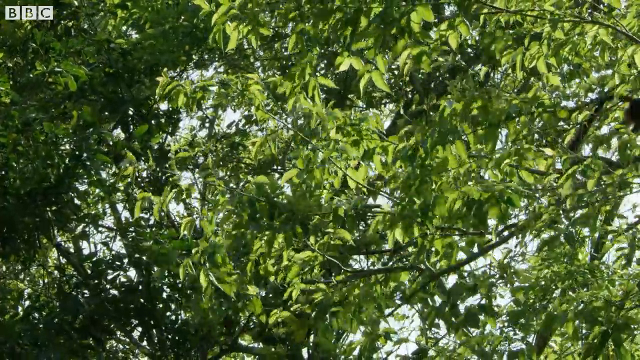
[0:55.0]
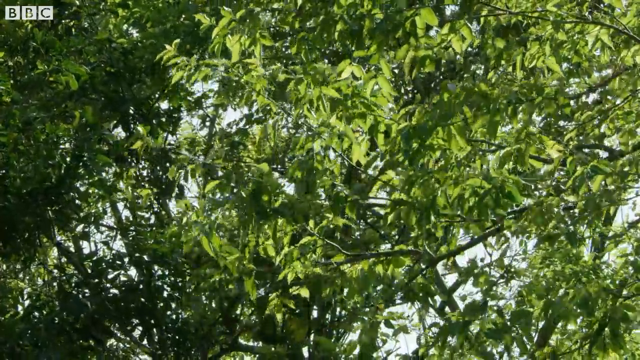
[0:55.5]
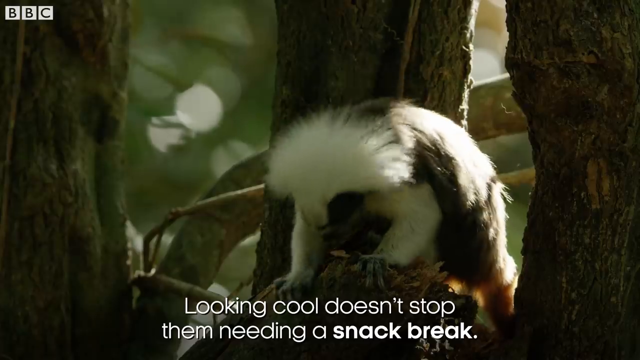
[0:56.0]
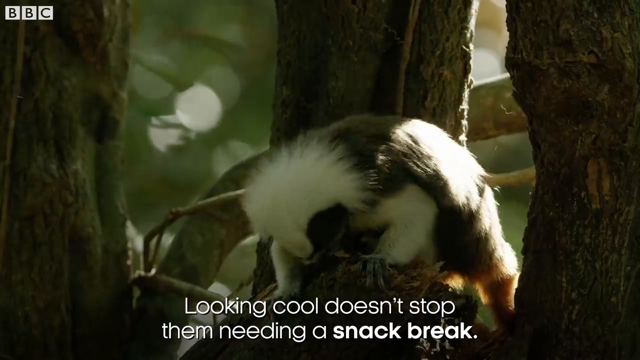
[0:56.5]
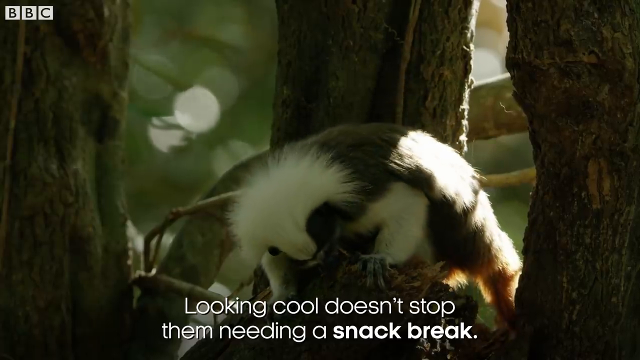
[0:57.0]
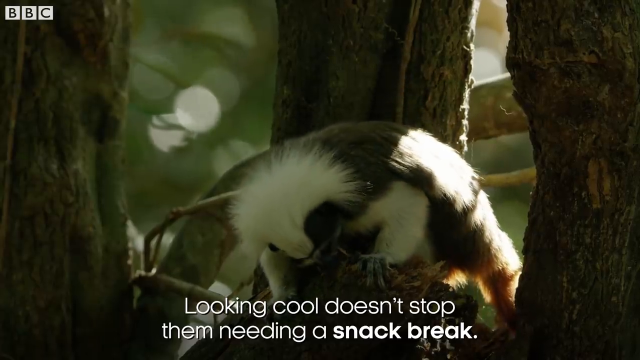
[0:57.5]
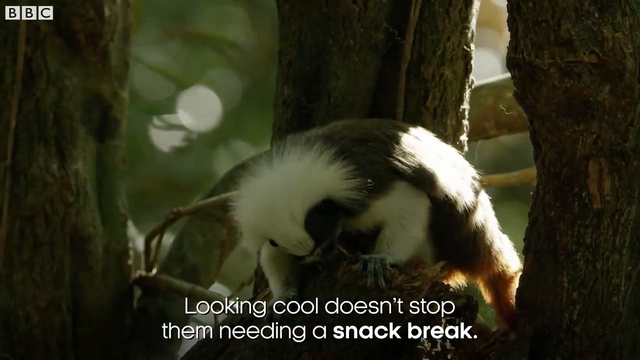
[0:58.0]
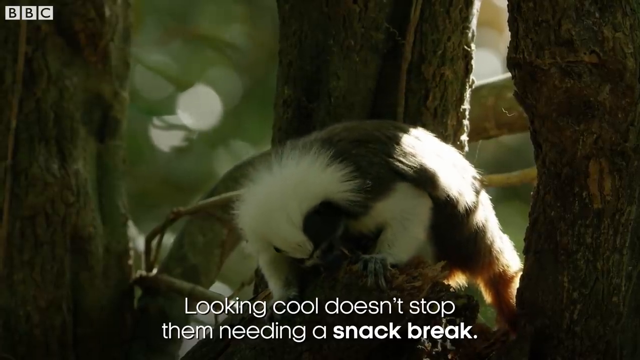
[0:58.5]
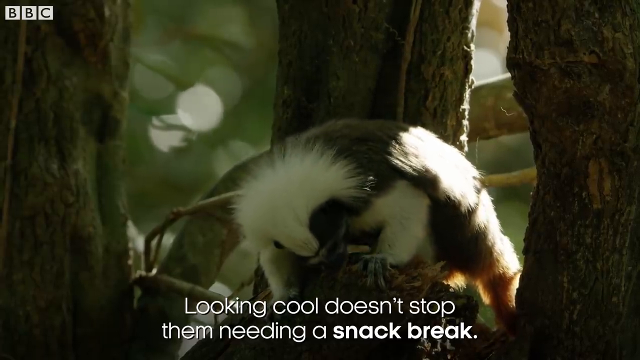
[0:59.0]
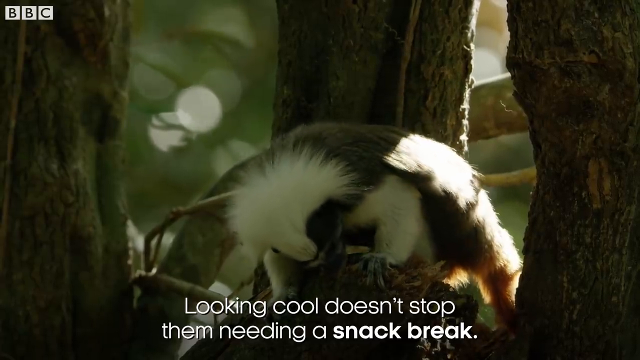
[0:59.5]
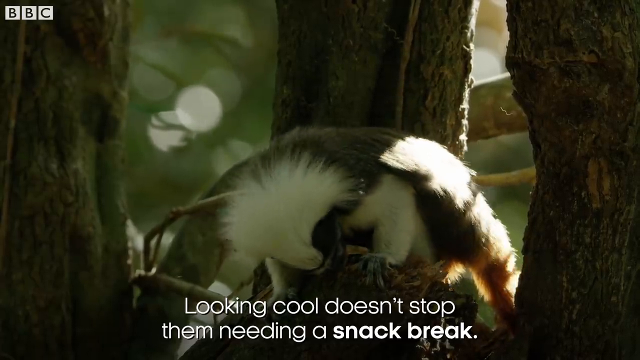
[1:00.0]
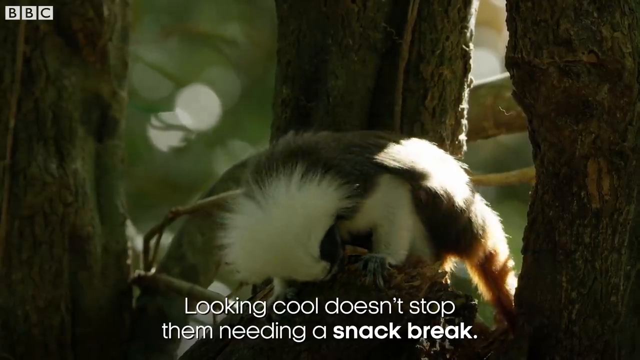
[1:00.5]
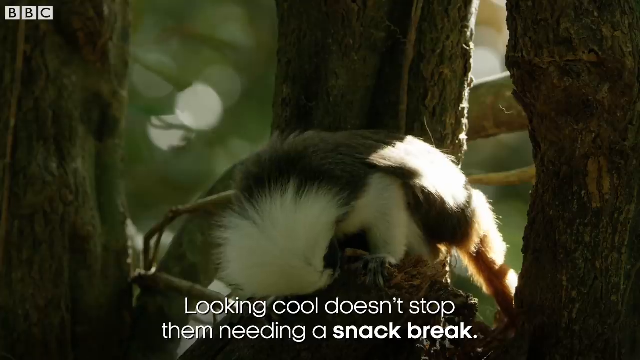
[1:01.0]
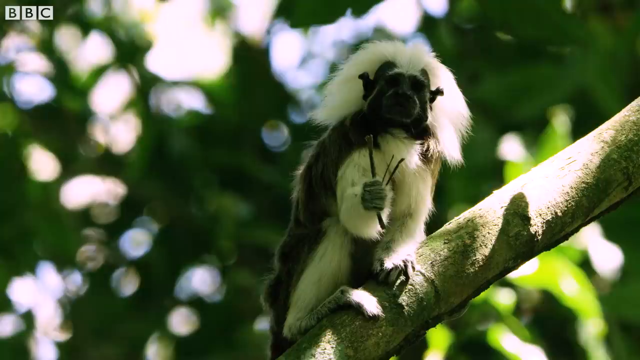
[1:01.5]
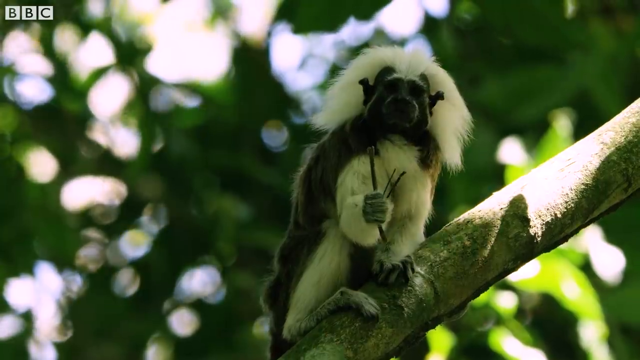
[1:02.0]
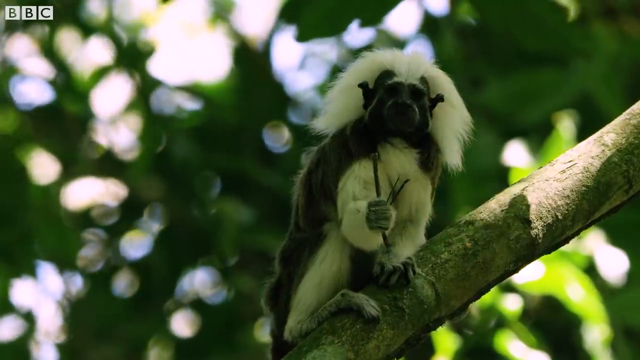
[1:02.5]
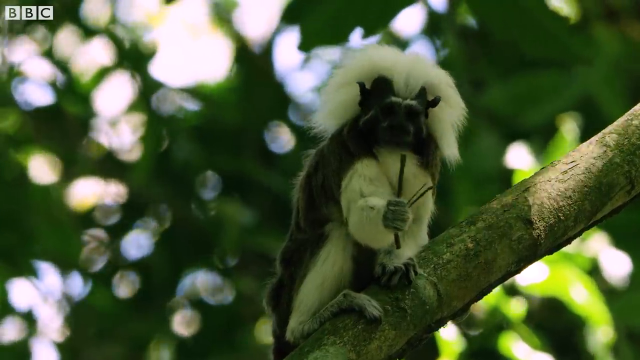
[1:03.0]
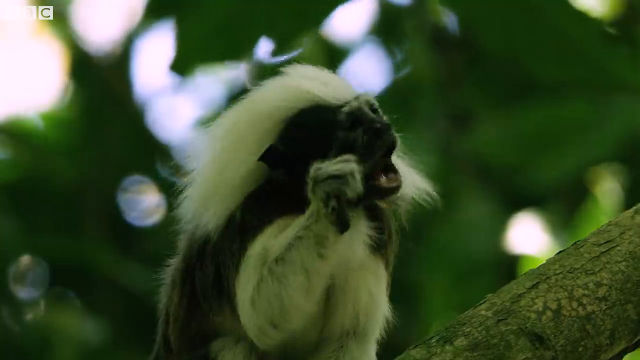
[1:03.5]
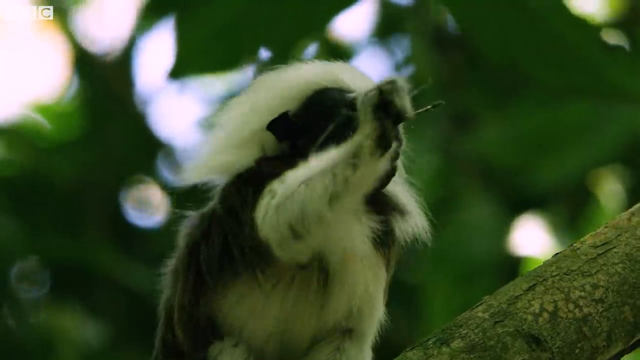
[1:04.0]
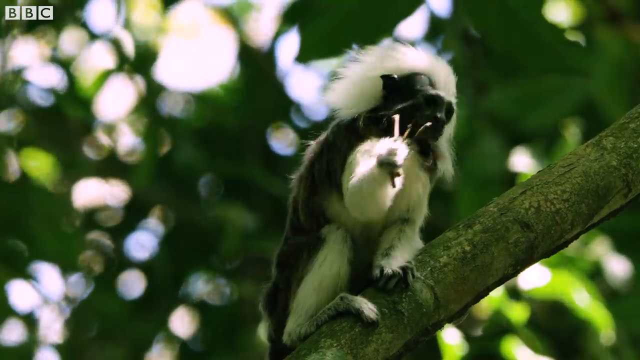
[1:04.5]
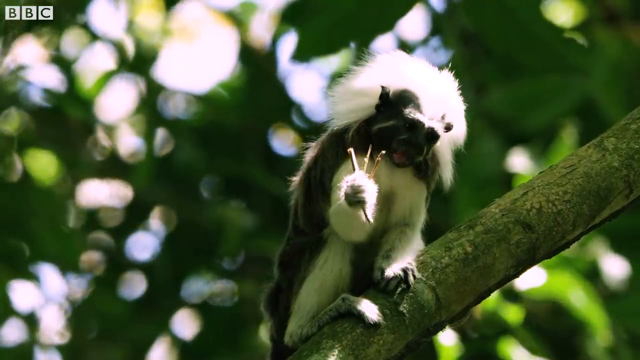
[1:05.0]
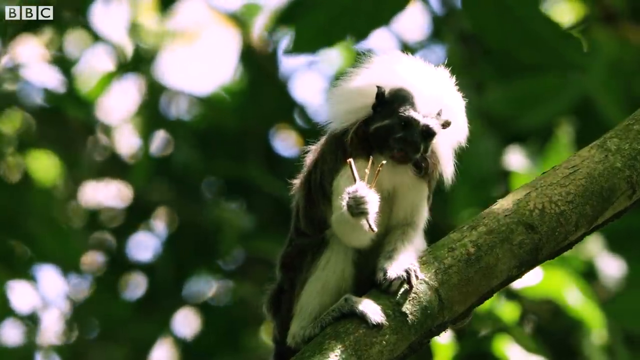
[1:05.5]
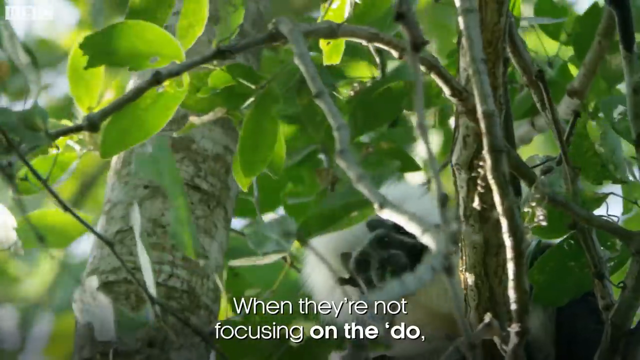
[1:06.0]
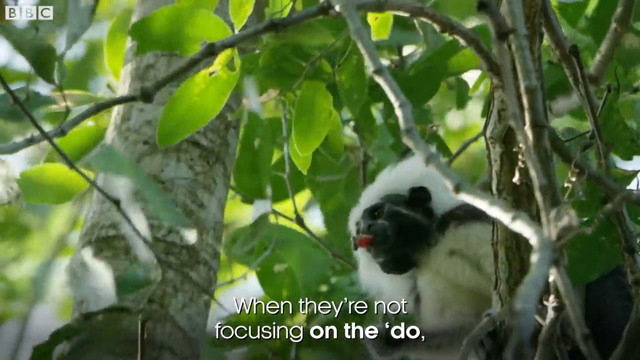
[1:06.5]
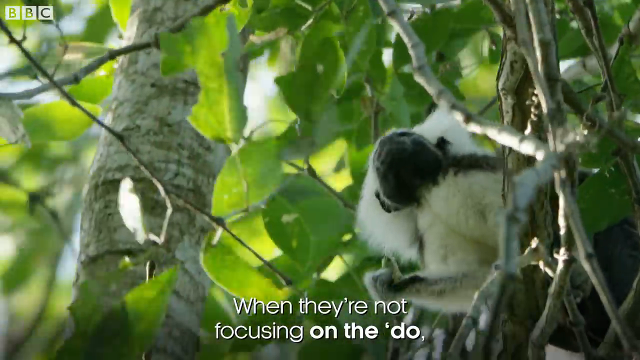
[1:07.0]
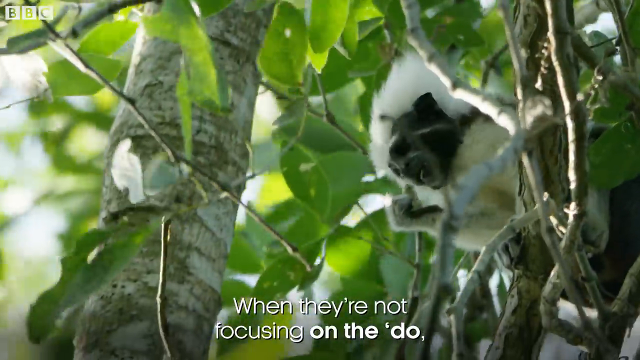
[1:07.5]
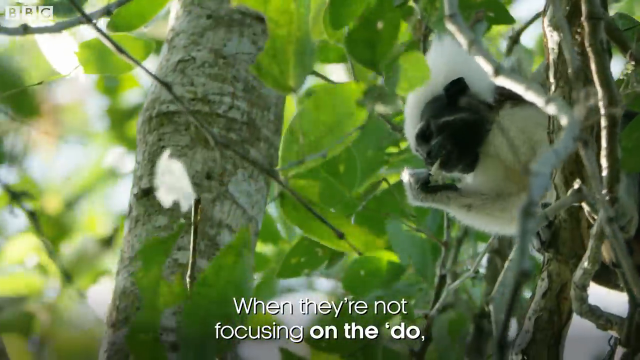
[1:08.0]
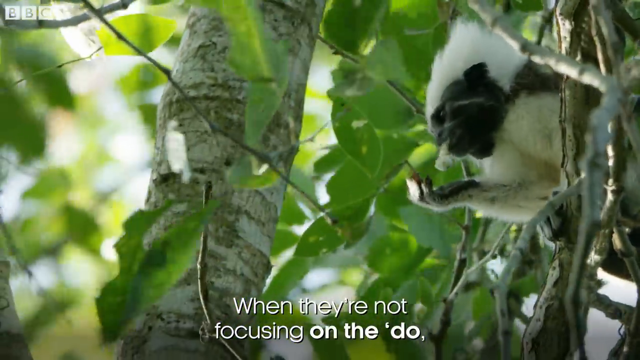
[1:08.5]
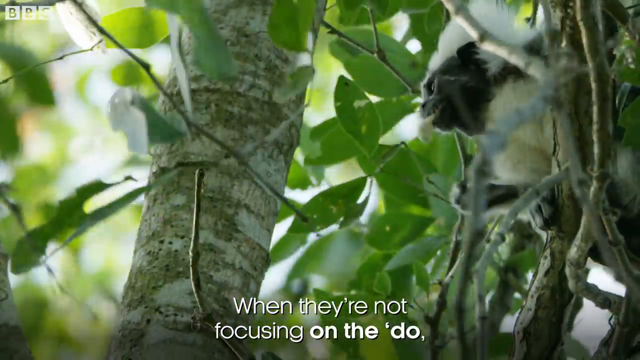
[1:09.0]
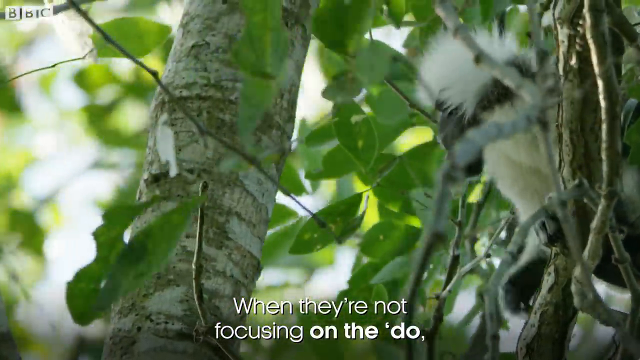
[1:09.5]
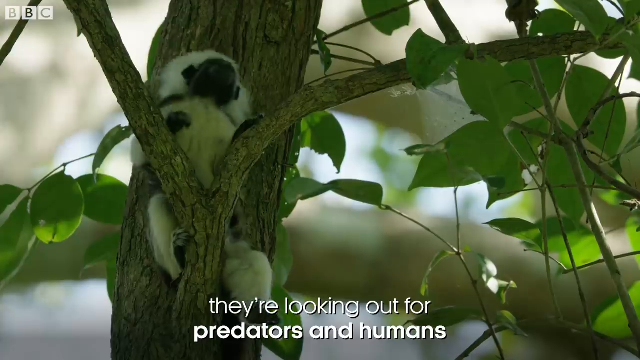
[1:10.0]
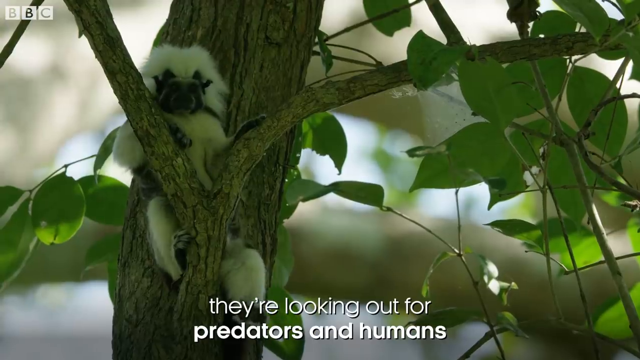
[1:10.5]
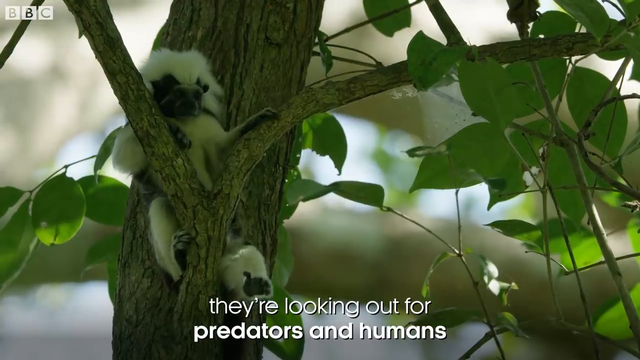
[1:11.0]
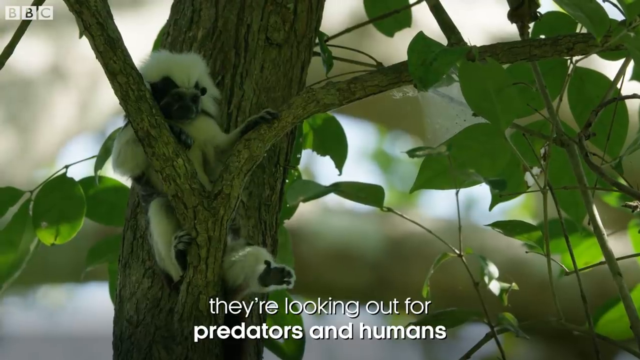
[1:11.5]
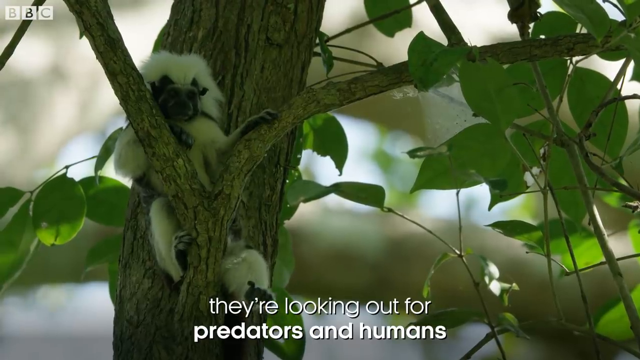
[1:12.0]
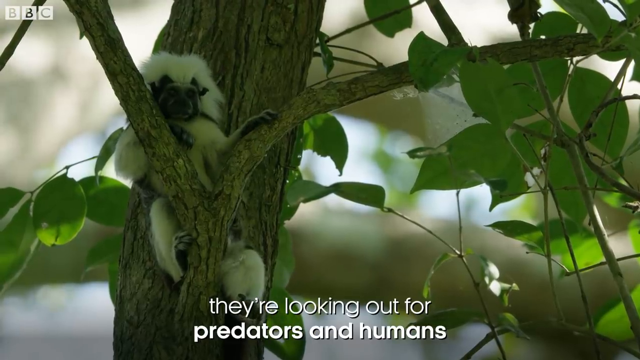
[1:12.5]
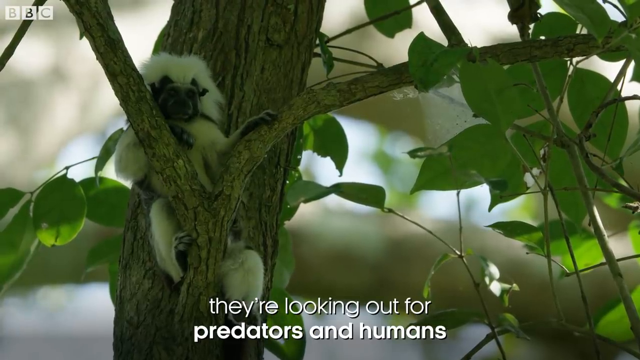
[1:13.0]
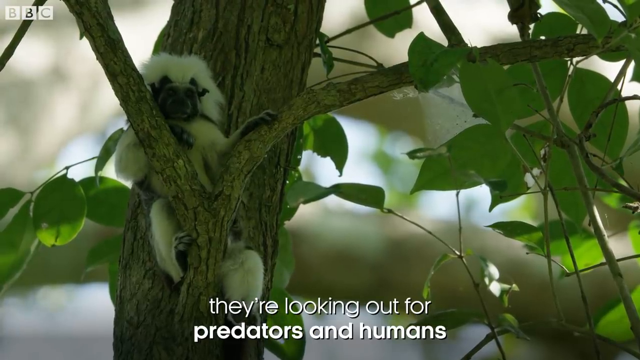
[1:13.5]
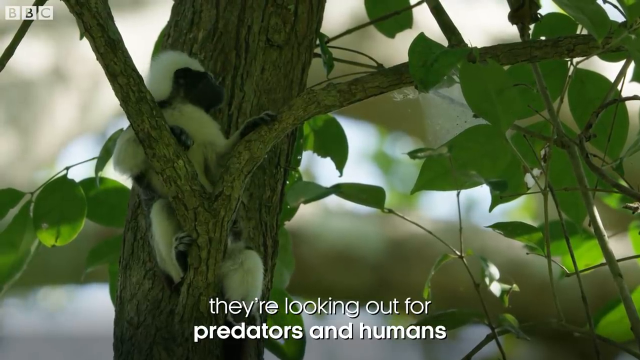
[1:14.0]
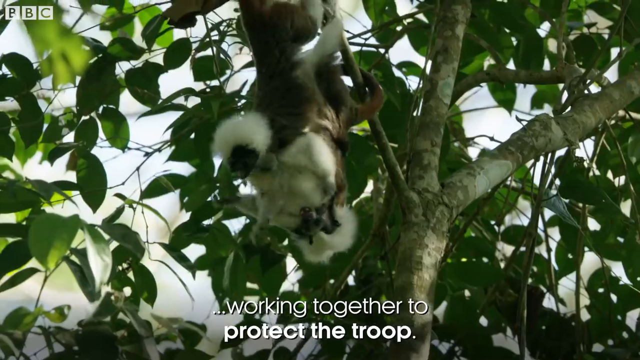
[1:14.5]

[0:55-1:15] The tamarin monkey is hanging out on a tree branch, kind of sitting, and looks like he is biting the branch. He then eats a stick, maybe three sticks in one, using his right paw and then his left paw. He munches on the twigs, and his pink tongue comes out of his mouth as he puts the twigs into it. He is surrounded by circular green leaves on a tree branch. The monkey has very poofy white hair and a grayish face. White text at the bottom reads "Looking cool doesn't stop them needing a snack break," with "snack break" in bold.